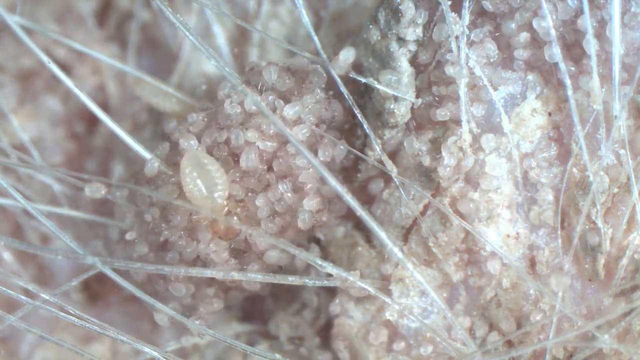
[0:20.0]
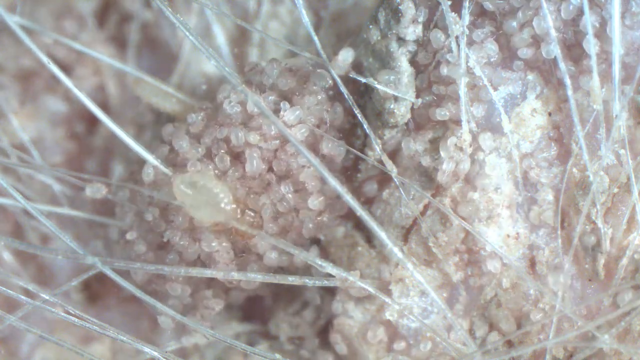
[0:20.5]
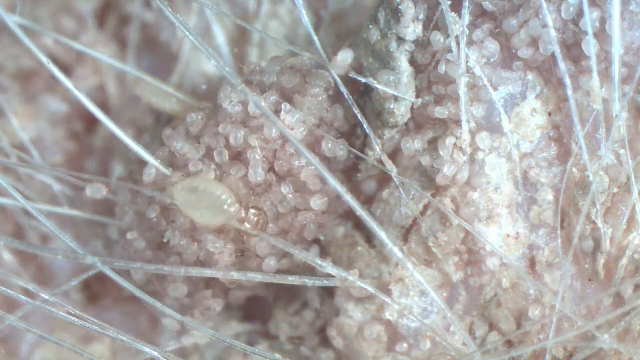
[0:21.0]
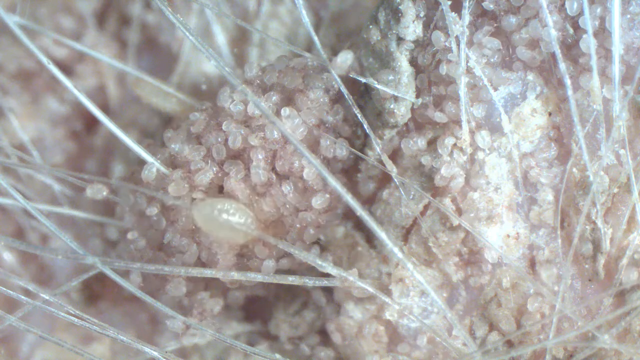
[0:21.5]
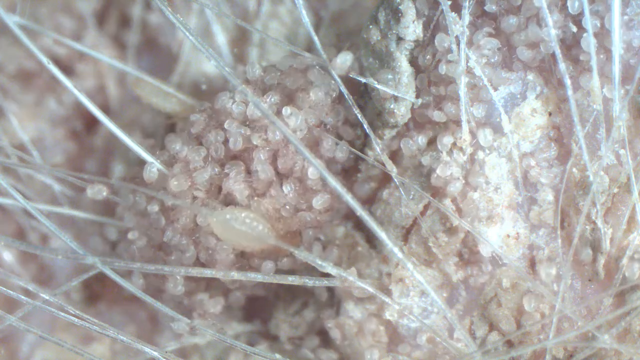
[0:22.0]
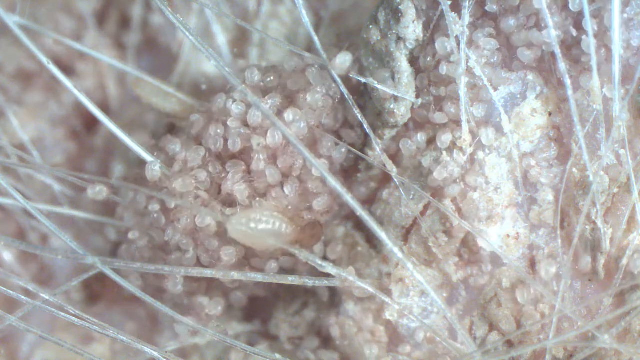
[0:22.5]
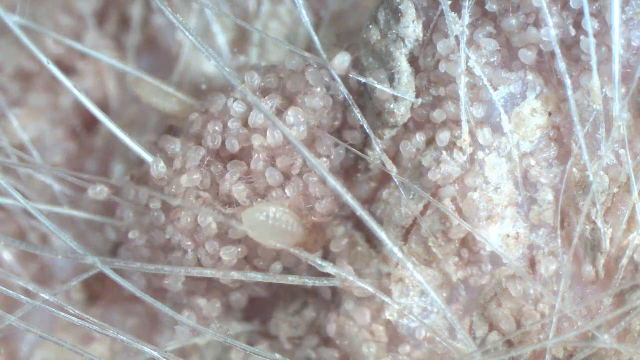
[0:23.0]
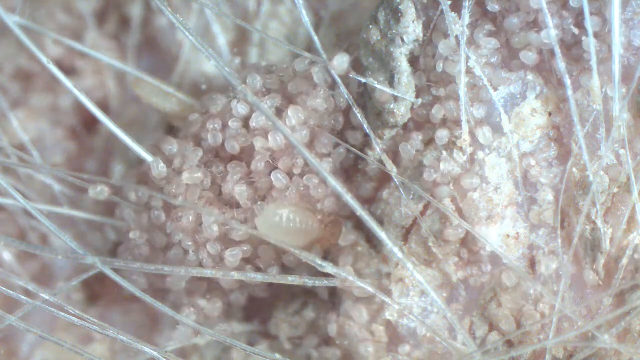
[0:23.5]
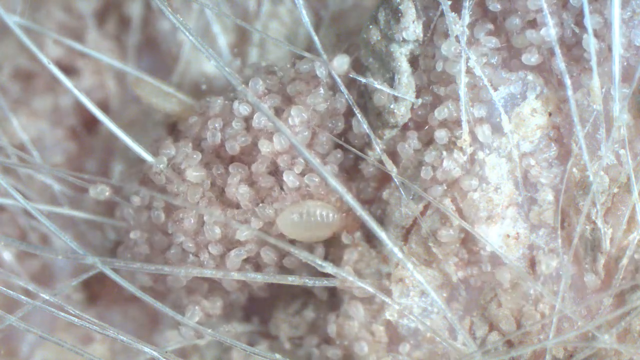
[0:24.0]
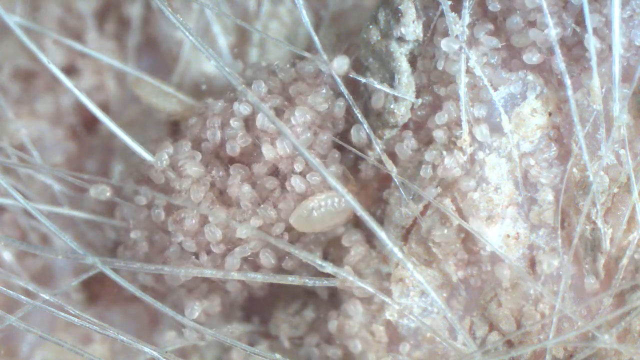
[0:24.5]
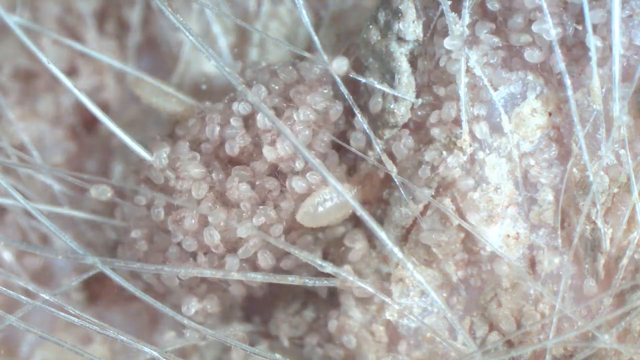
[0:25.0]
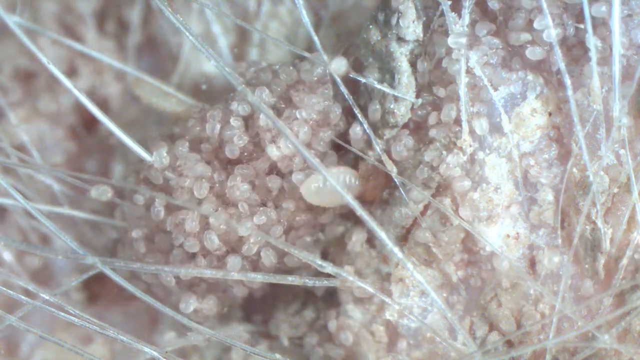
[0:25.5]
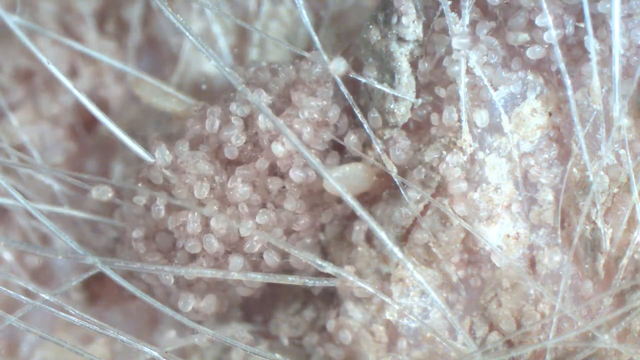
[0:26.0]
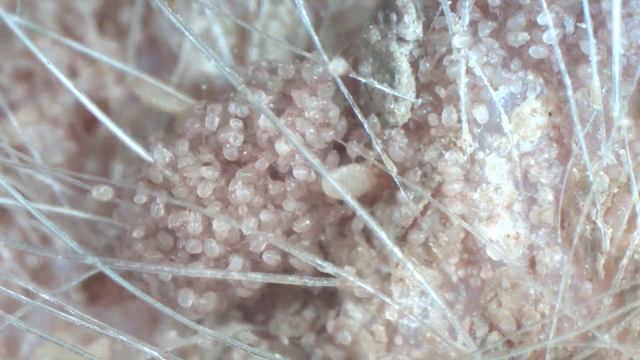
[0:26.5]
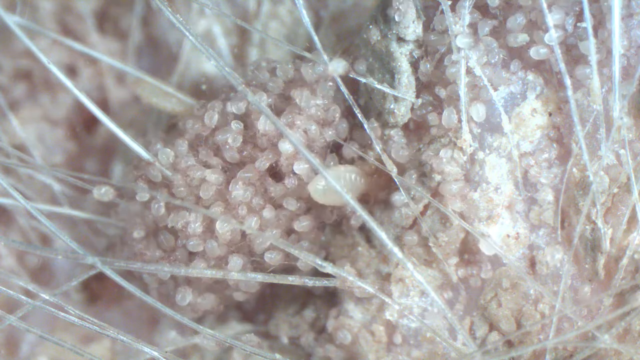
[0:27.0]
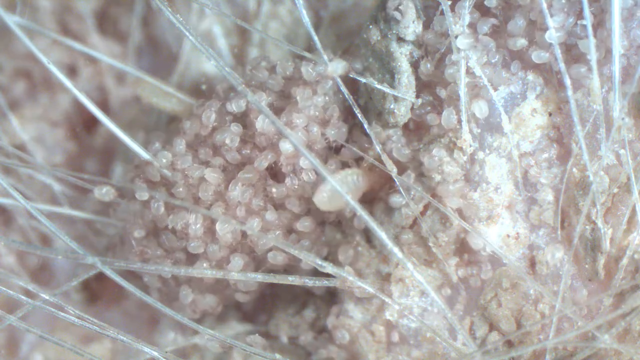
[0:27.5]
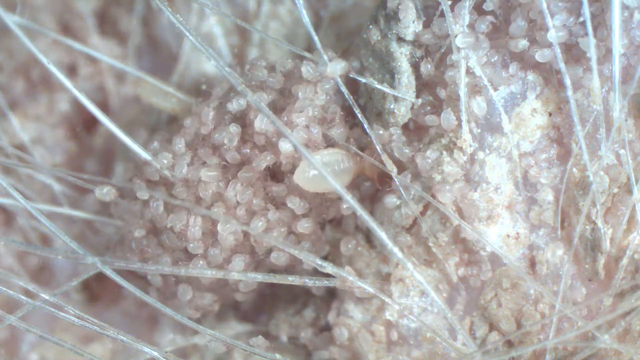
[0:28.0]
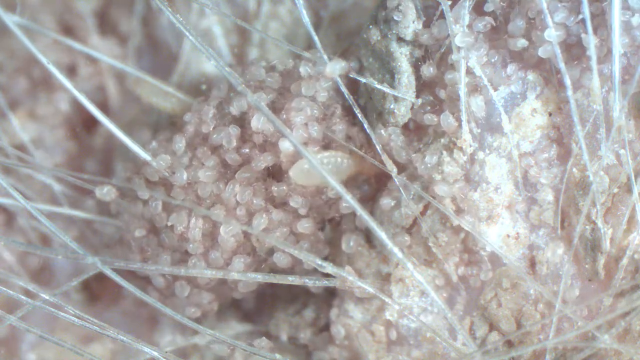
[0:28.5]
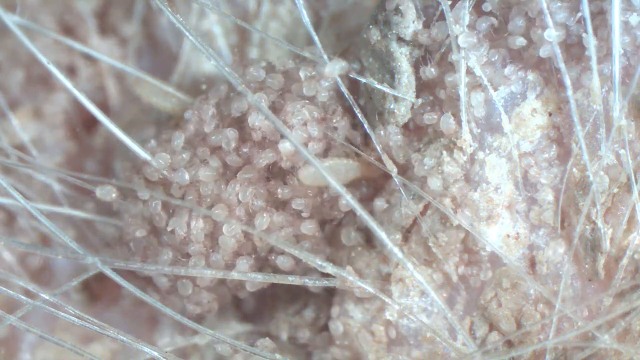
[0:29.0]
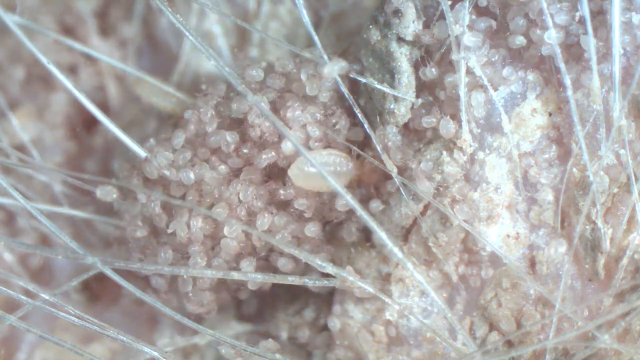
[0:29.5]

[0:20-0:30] The giant bug with the flat oval body moves across the bundle of small white bugs and reaches the center of the screen, where it appears to bury itself toward the middle. Its movements are neither exactly slow nor exactly fast. It is at least 10 times bigger than all the other bugs. There appears to be only one type of bug; the others are small and tiny, possibly babies, with the larger bug possibly an adult. The environment is somewhat white and clear, with clear spikes or strings coming out of the ground. The video looks like it might be very zoomed in.